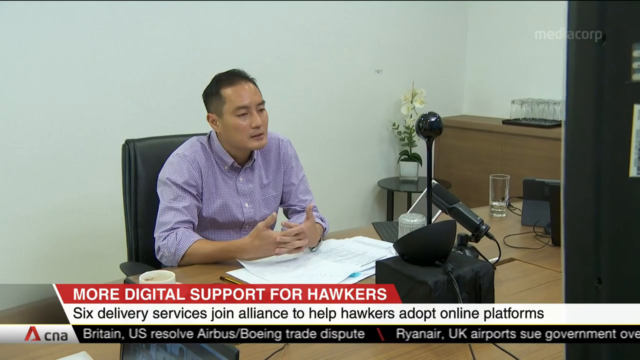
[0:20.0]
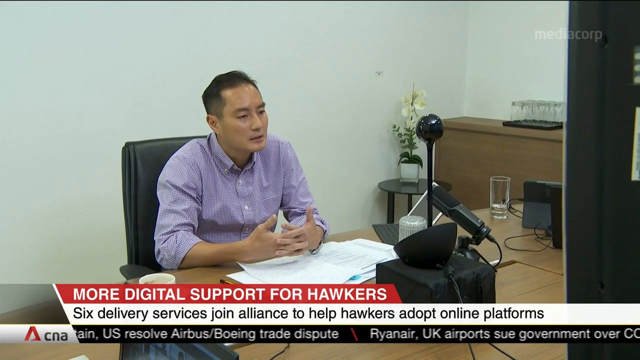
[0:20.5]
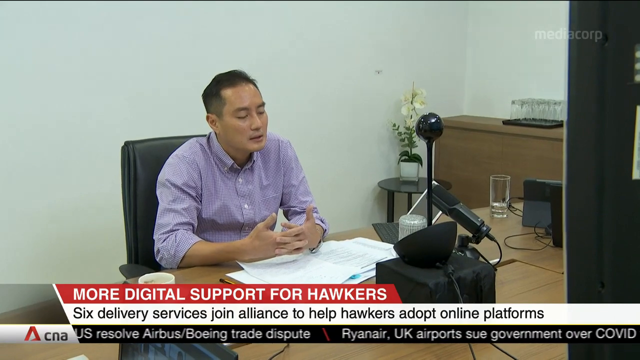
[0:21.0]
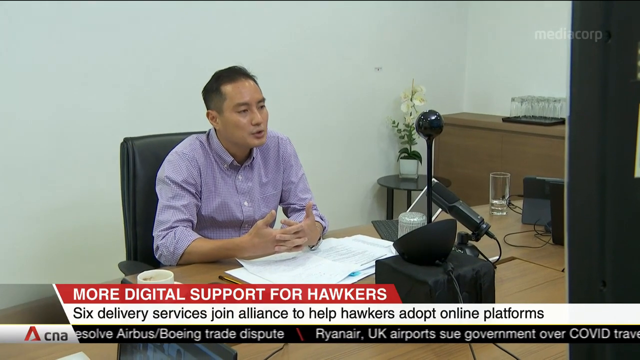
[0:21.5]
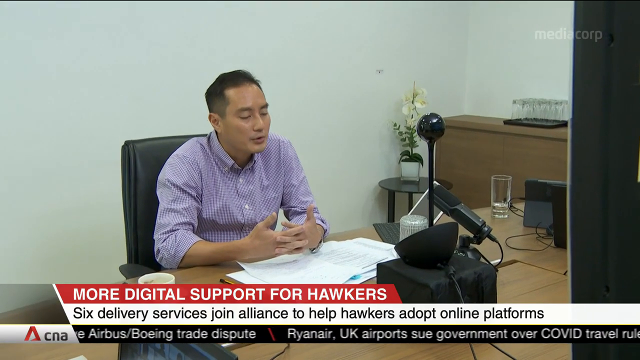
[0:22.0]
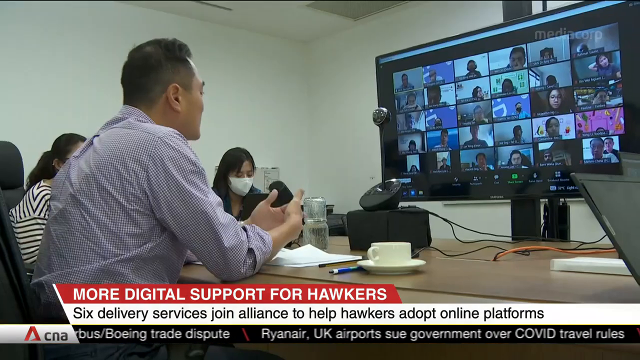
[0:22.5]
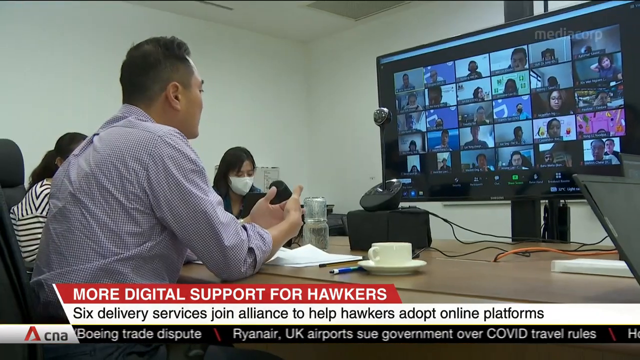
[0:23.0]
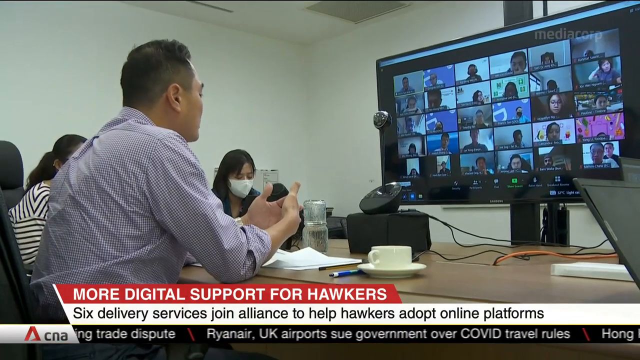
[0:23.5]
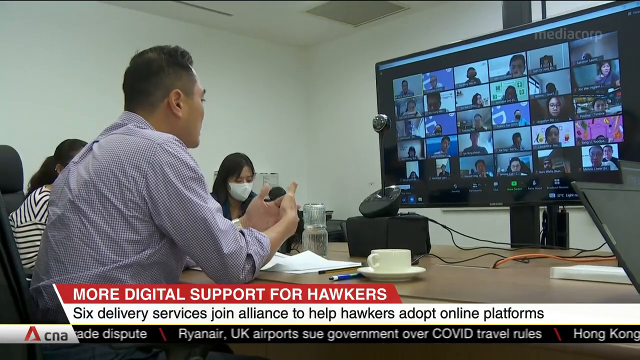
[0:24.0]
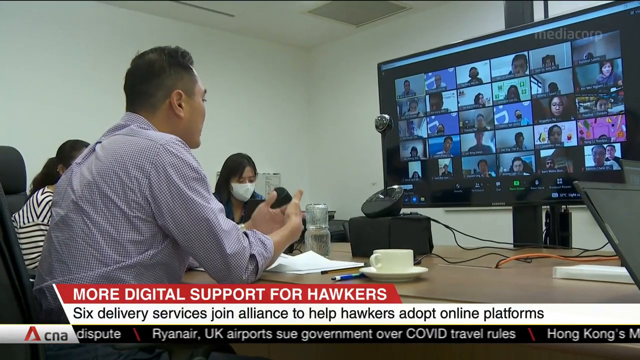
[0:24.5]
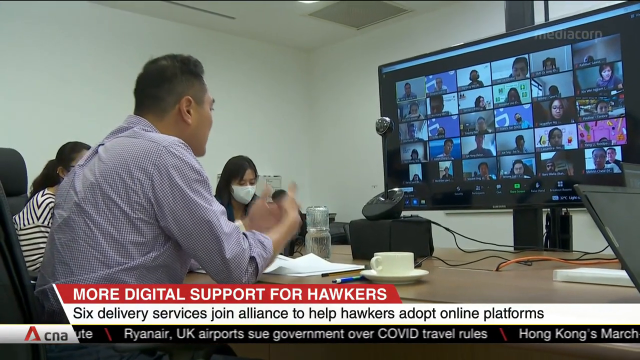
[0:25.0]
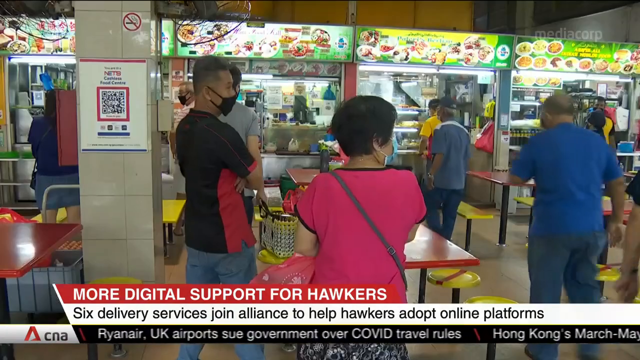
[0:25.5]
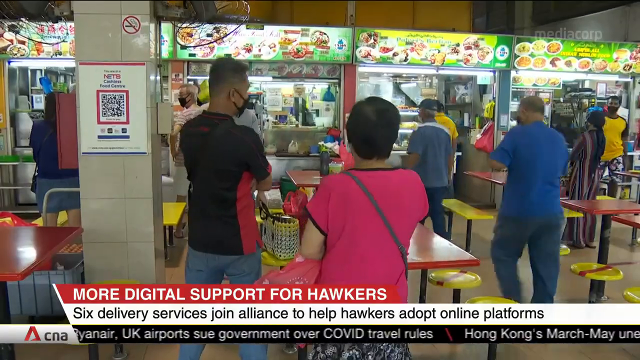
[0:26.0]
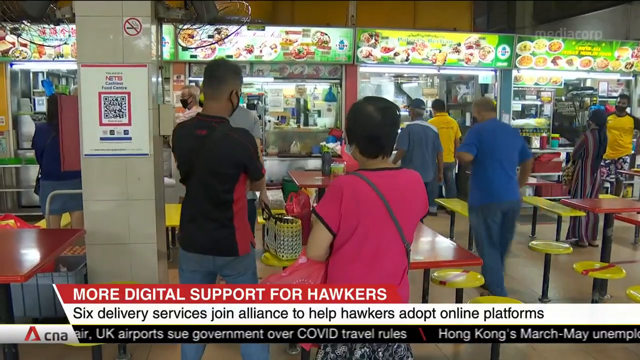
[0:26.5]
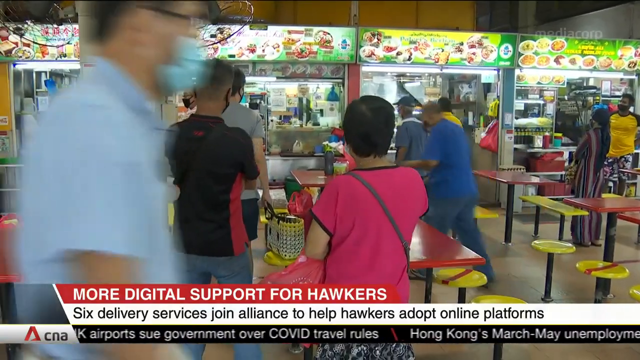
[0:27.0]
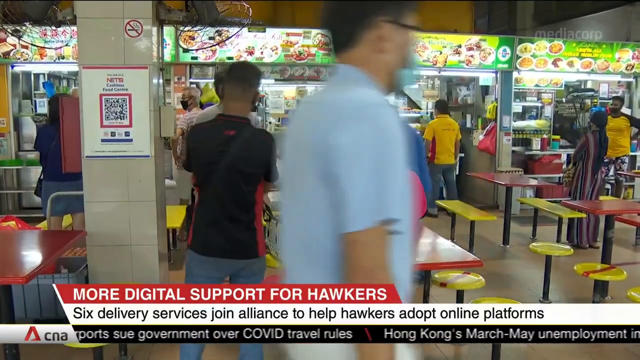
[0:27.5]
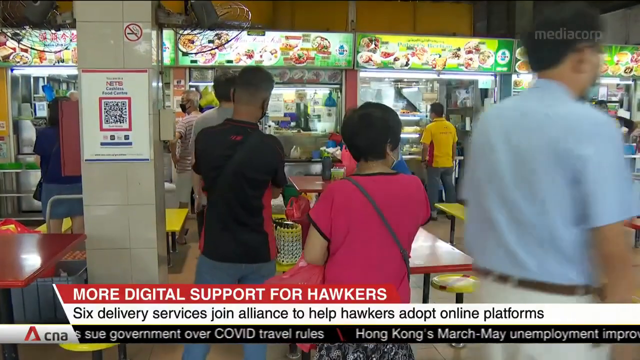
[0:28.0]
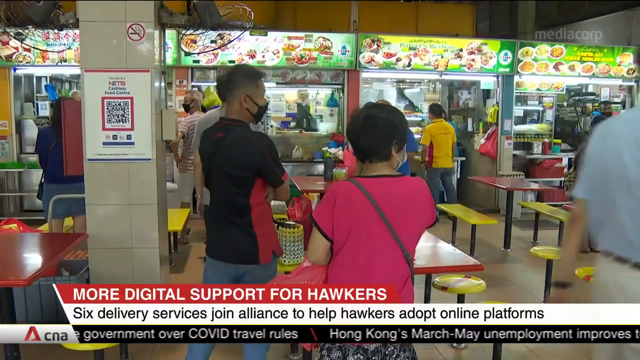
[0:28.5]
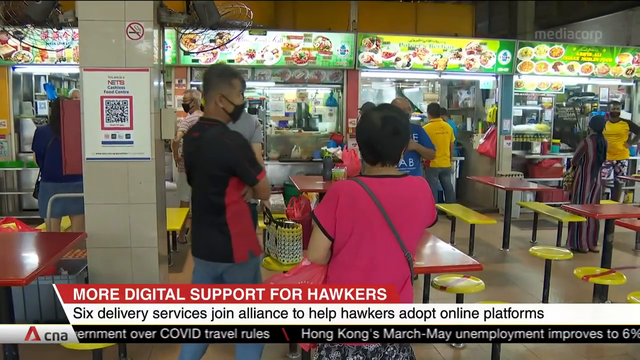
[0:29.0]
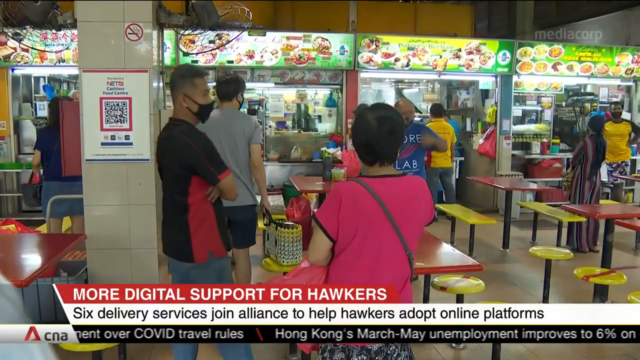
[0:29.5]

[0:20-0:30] Someone appears on a Zoom call, talking. The video then shows some restaurants, which look kind of like hole-in-the-wall Chinese places.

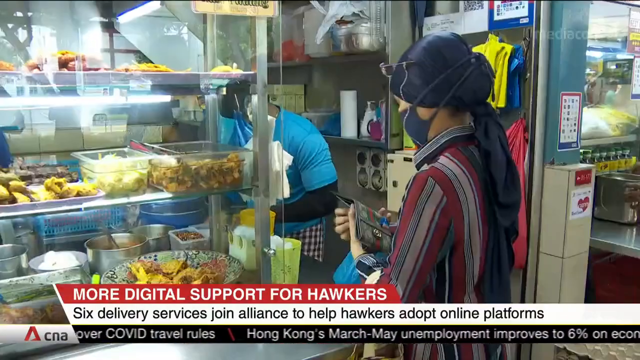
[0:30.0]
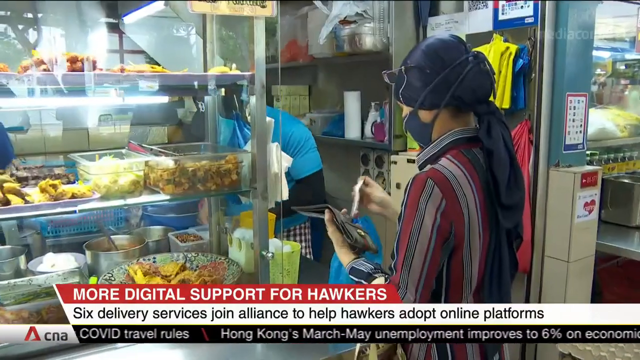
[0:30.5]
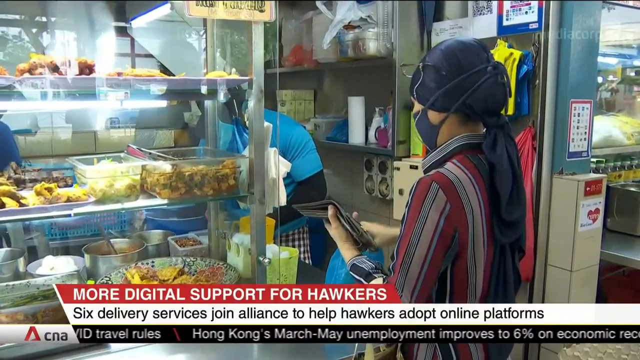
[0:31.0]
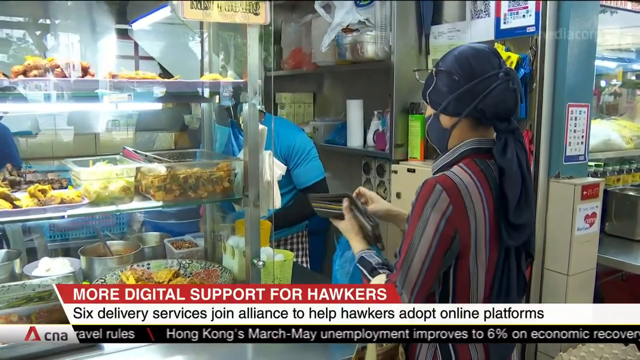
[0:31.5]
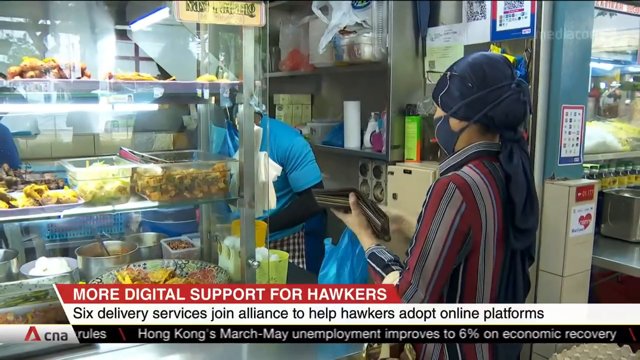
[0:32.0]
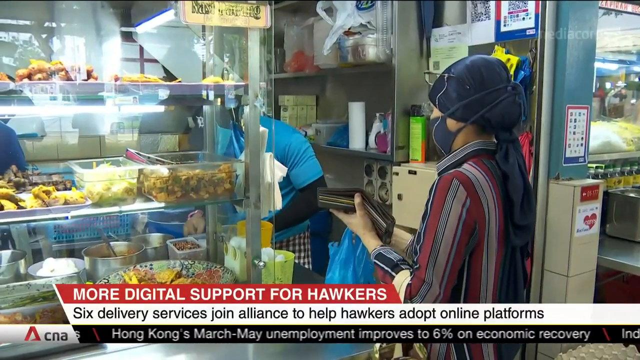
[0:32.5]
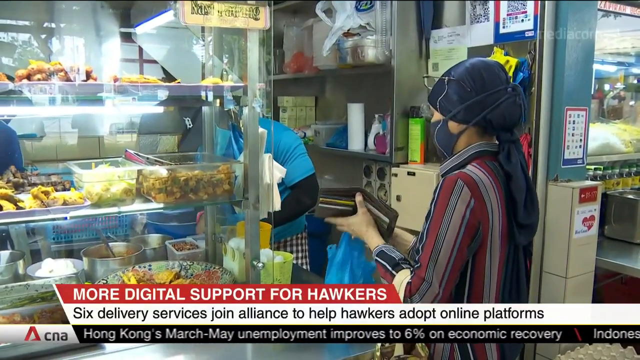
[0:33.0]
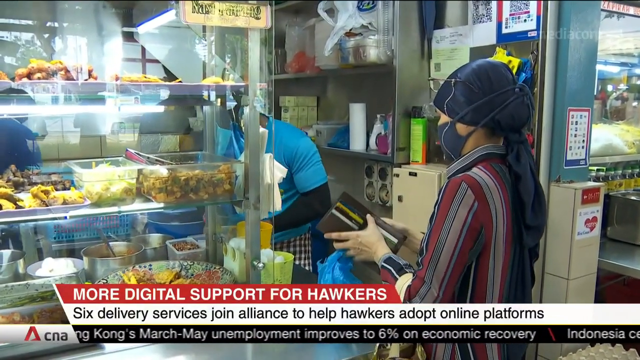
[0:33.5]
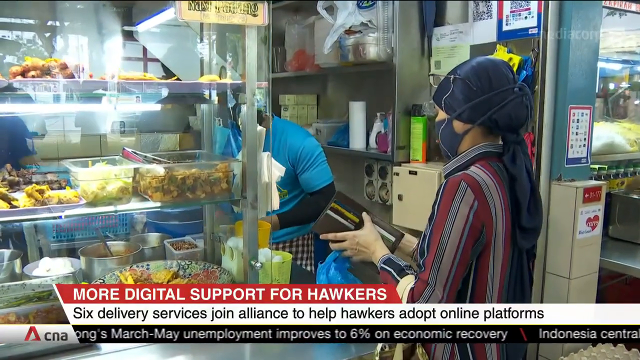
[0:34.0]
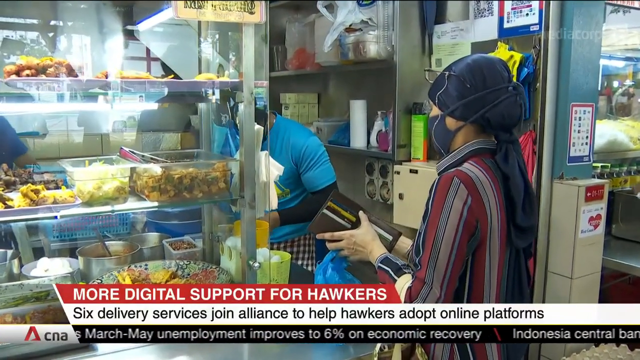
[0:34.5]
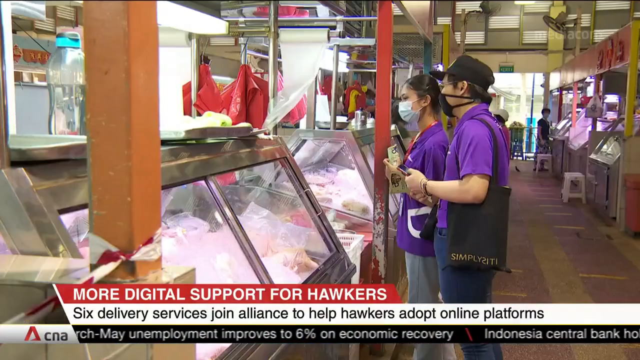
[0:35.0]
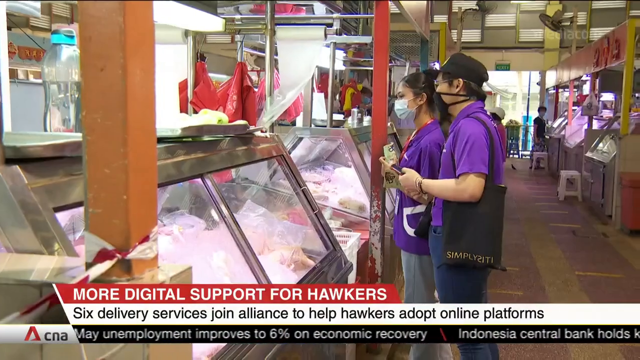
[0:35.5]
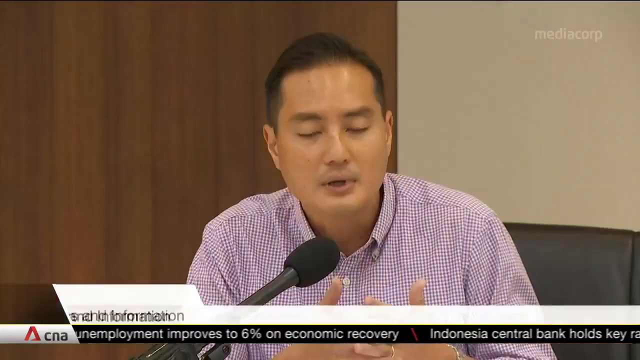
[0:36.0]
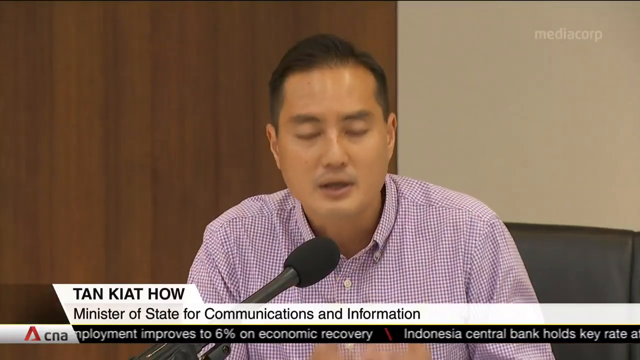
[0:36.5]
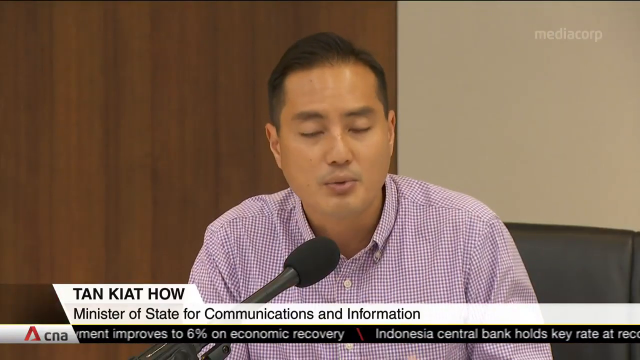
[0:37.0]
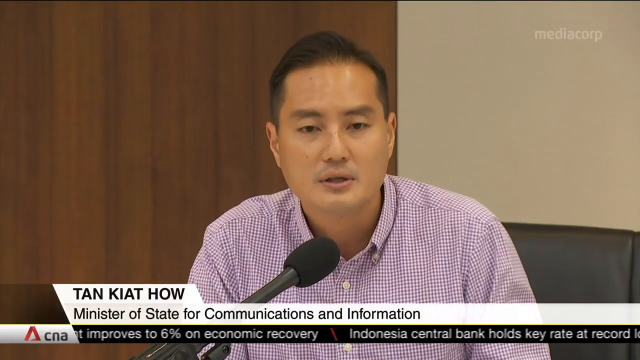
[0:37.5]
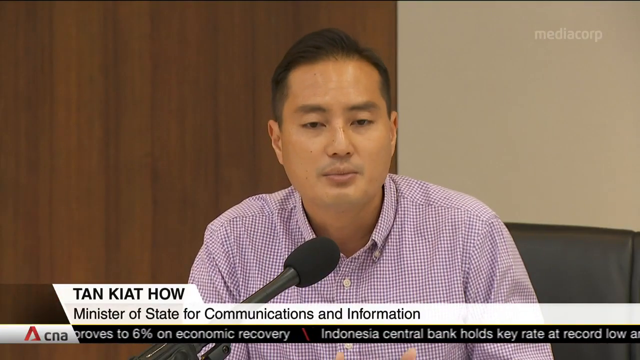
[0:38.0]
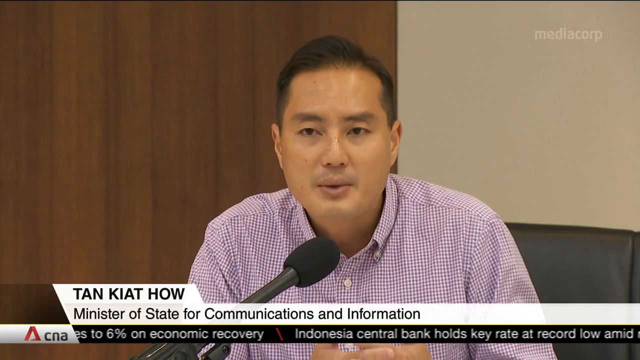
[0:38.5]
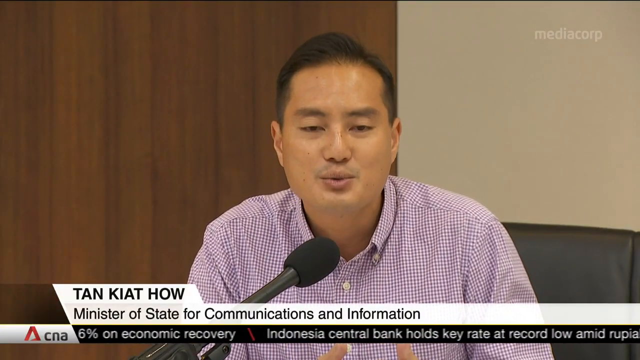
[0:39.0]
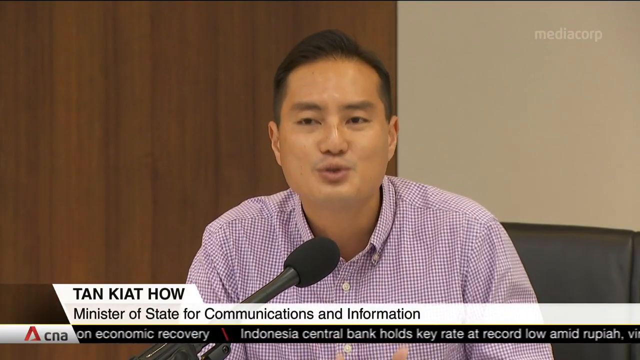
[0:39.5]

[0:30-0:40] Restaurants are shown, and then the video cuts to a second man being interviewed, who is identified as the Minister of State for Communication and Information.